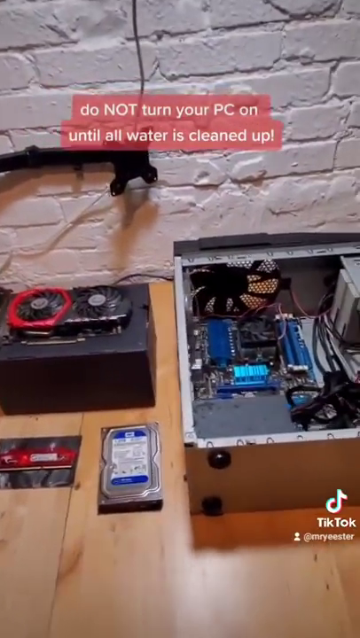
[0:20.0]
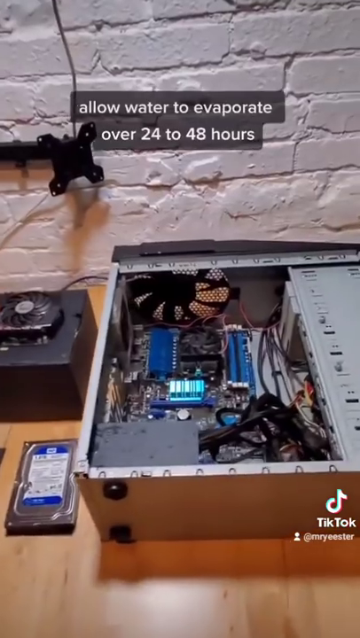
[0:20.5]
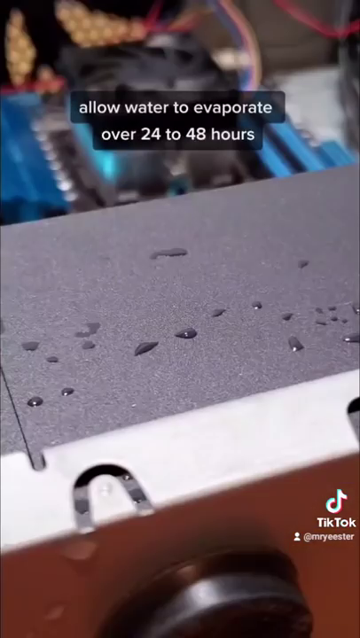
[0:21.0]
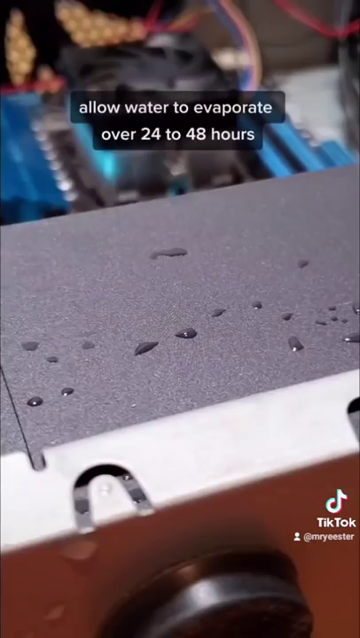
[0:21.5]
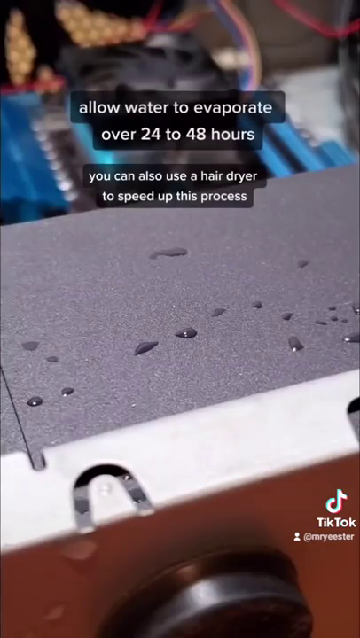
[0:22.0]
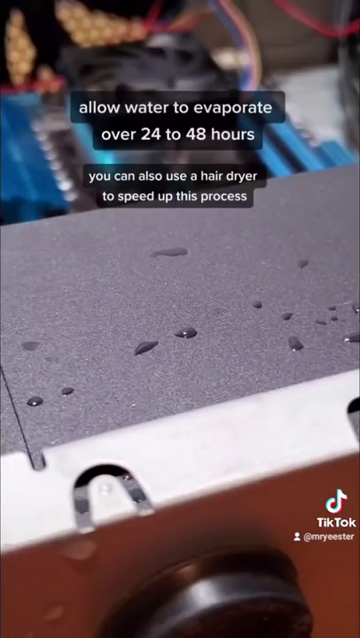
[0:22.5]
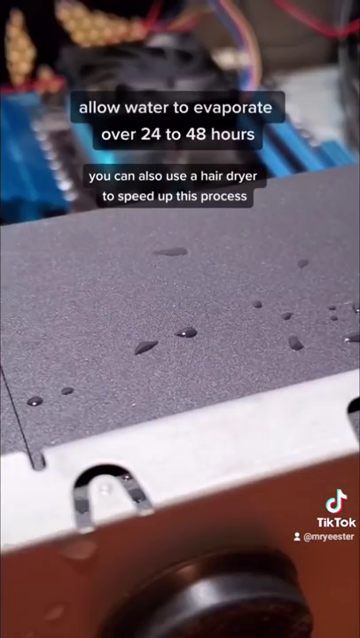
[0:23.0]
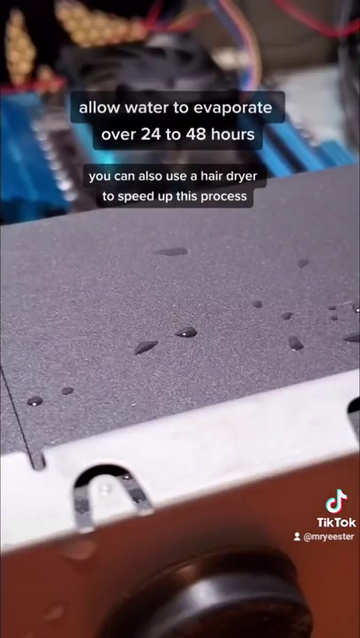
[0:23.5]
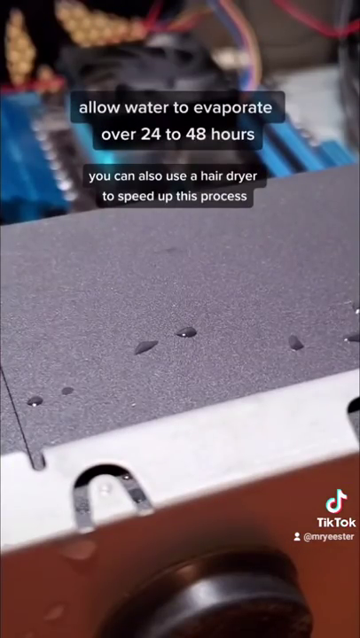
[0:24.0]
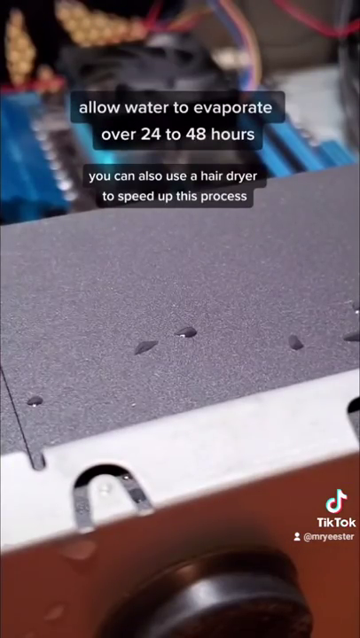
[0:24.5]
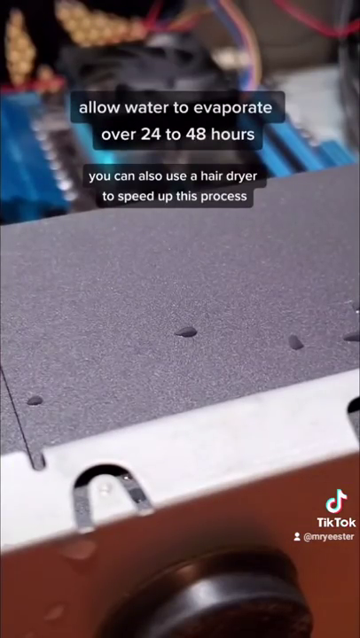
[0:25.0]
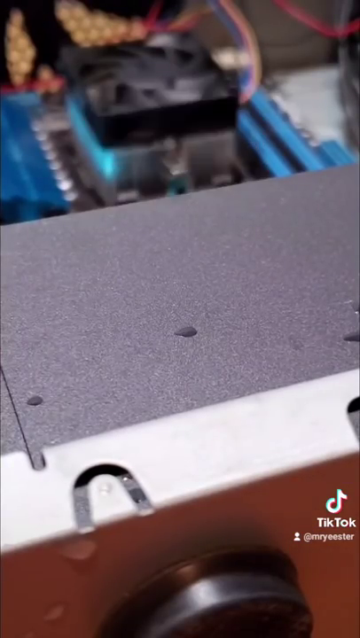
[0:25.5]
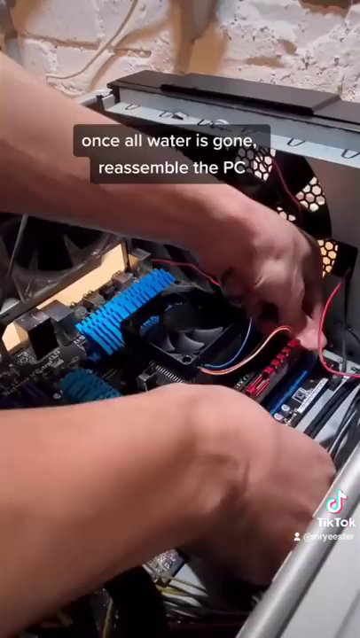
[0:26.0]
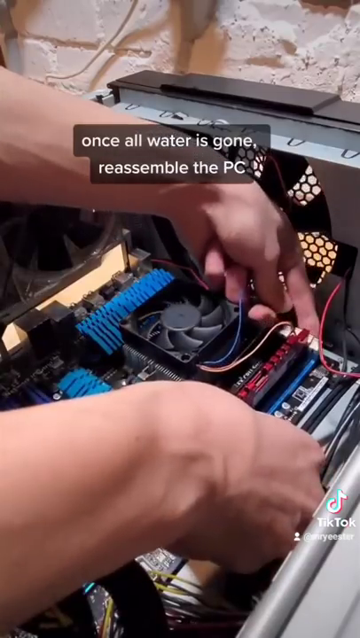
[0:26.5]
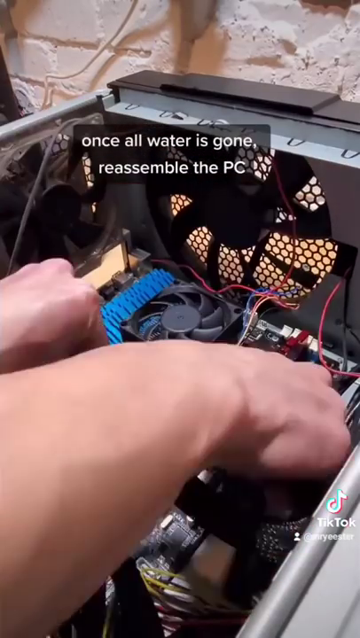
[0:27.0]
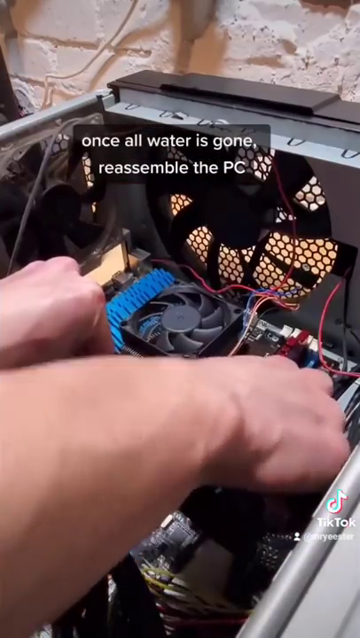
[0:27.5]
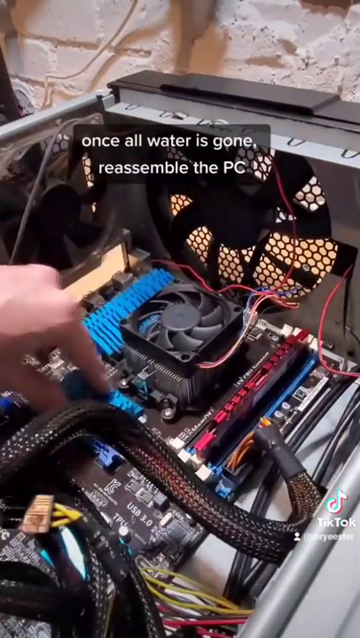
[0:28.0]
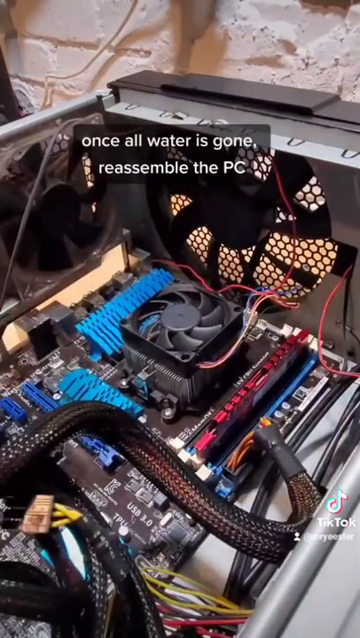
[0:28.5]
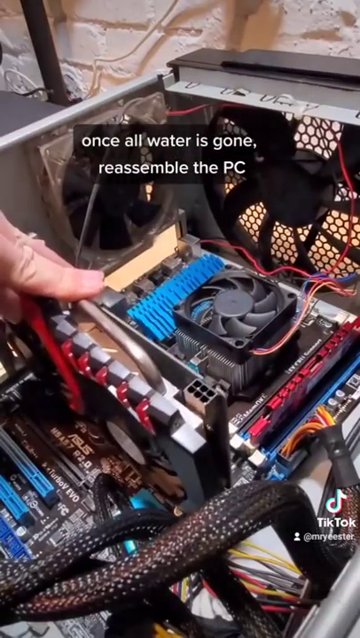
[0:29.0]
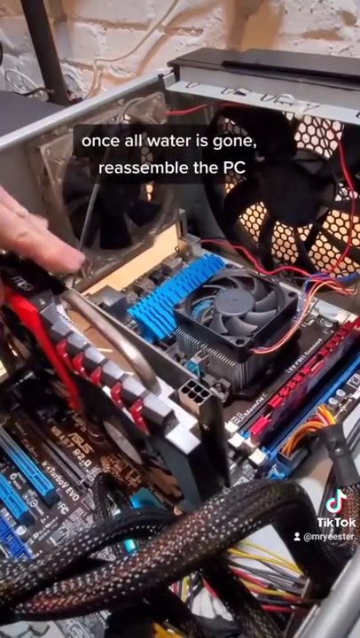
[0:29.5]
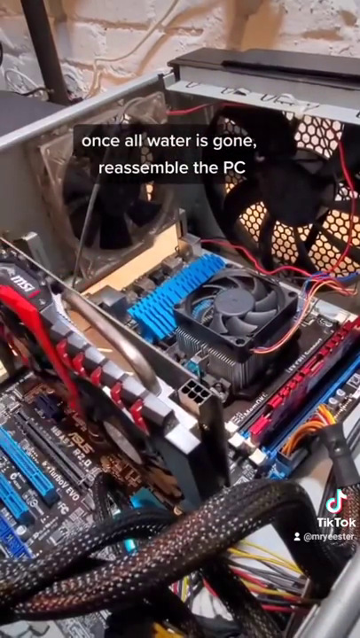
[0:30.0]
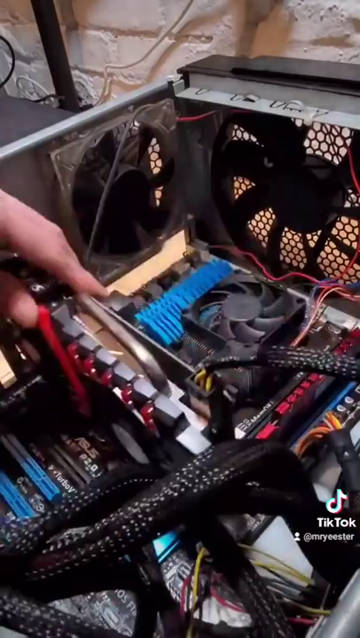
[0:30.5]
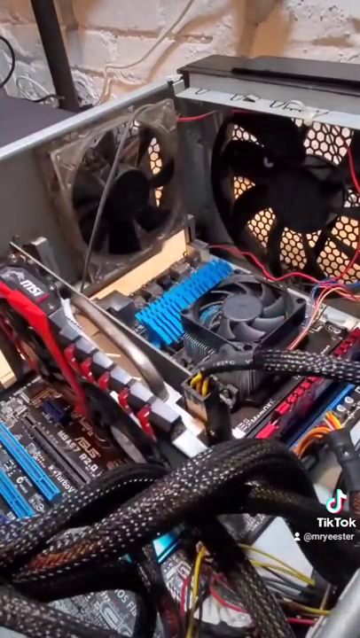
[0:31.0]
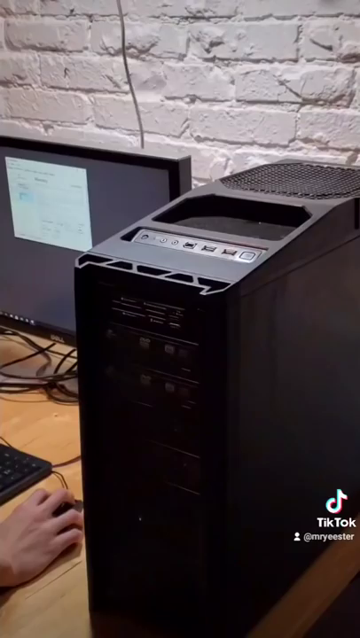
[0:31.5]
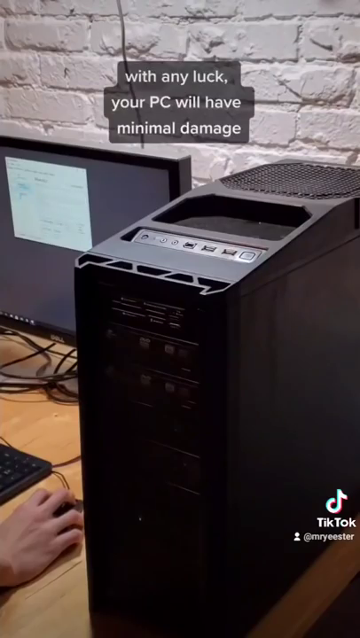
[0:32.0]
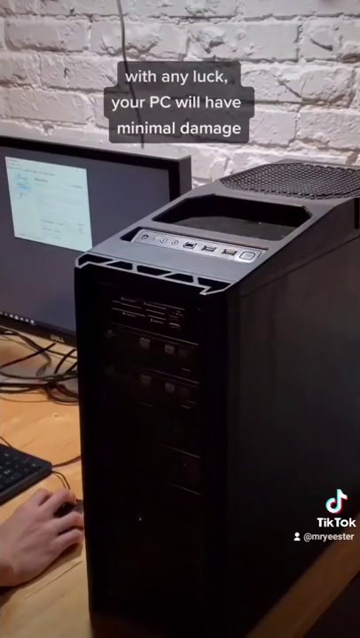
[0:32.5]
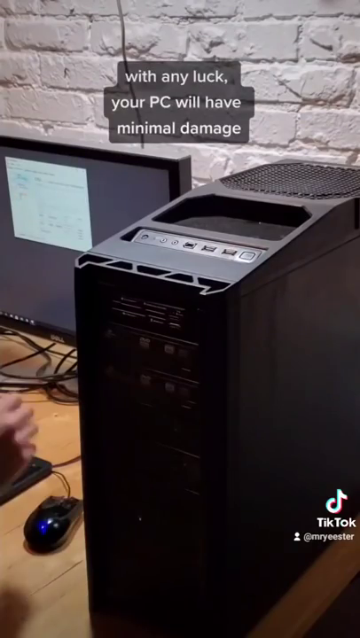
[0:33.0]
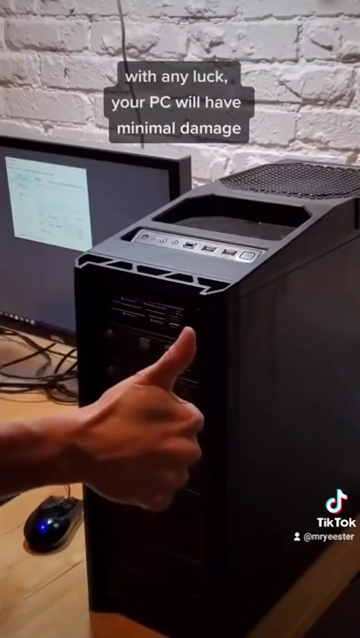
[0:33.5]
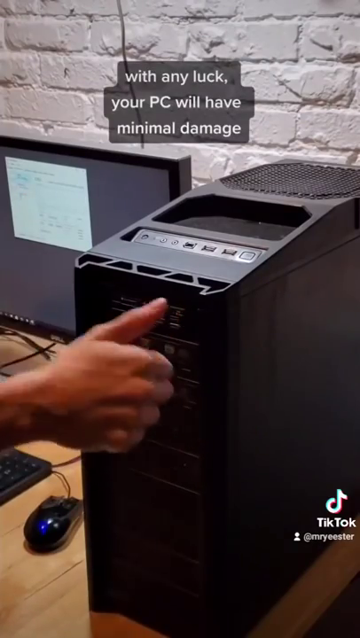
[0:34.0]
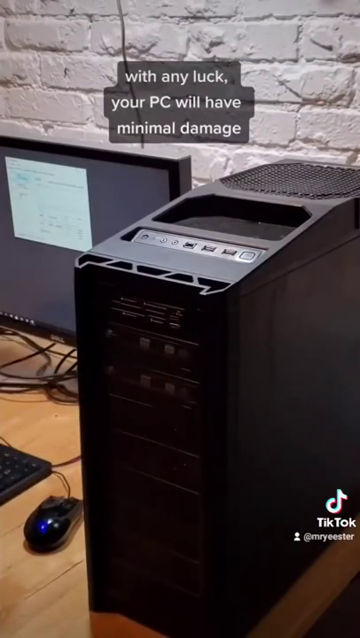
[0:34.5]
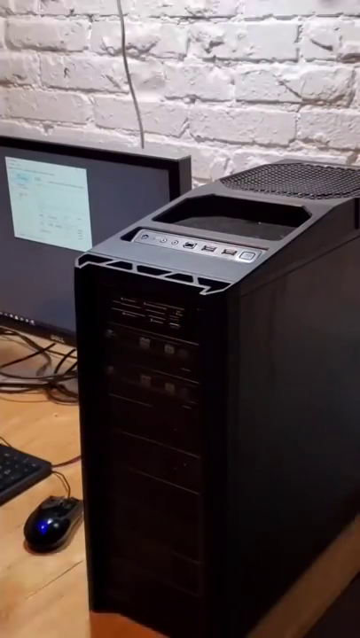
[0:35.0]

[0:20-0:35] Water evaporates on the PC while a message overlaid on the video says to allow 24 to 48 hours for the water to evaporate, or that a hairdryer can be used to speed up the drying. The message then says to reassemble the PC after all of the water is gone. Meanwhile, the person plugs the video card back in and reinstalls the RAM and the power cords into the PC. An image of the reassembled tower appears with a thumbs-up image, saying that hopefully only minimal damage has been done by the spill. All of this takes place at a wooden desk in front of a white wall.